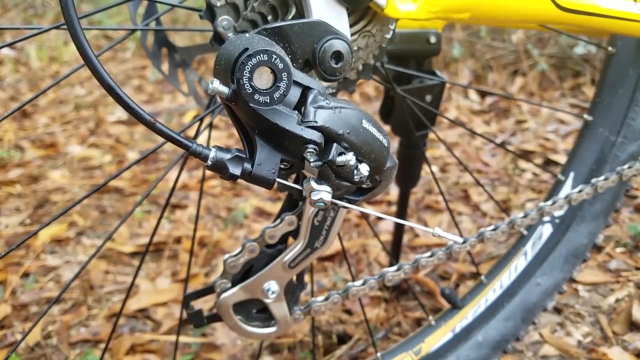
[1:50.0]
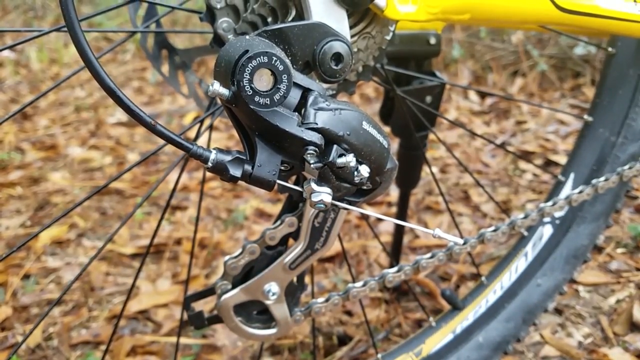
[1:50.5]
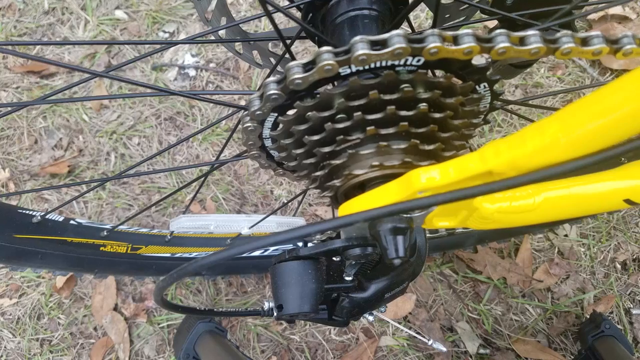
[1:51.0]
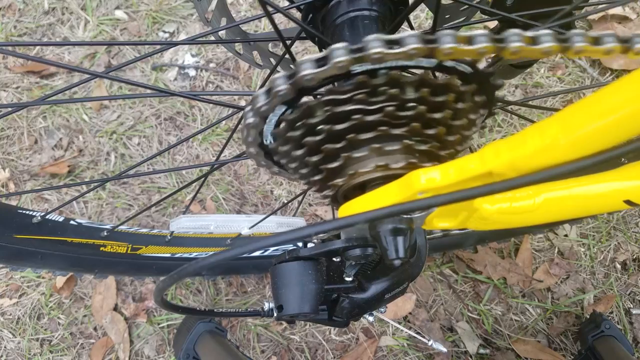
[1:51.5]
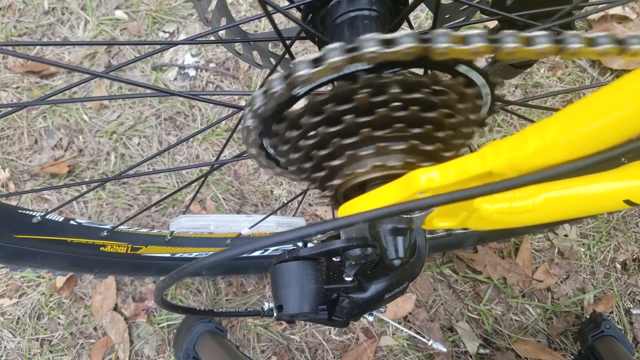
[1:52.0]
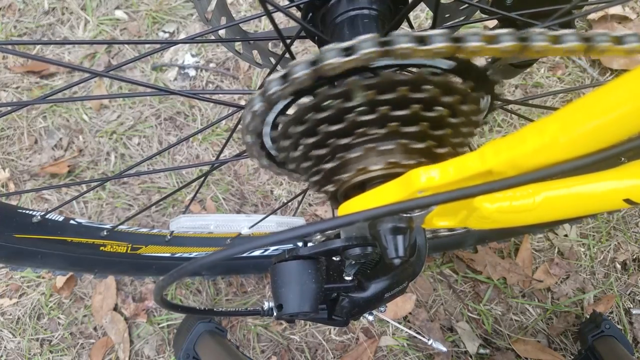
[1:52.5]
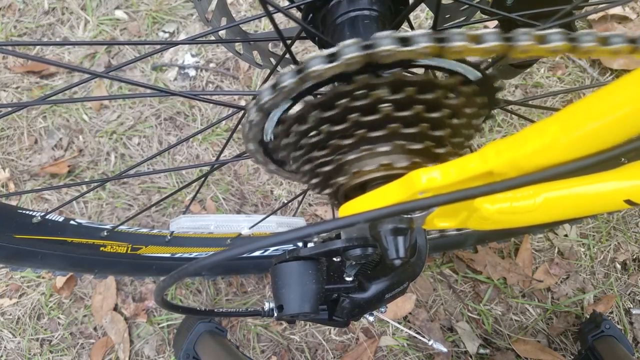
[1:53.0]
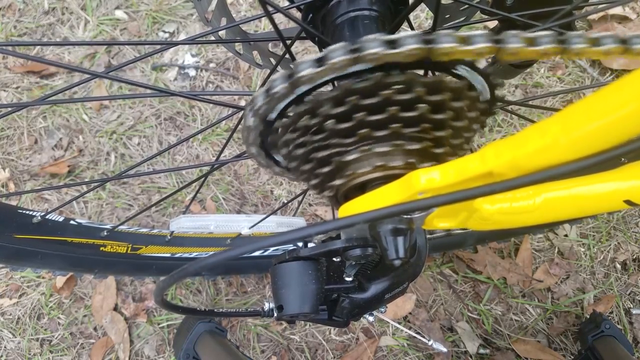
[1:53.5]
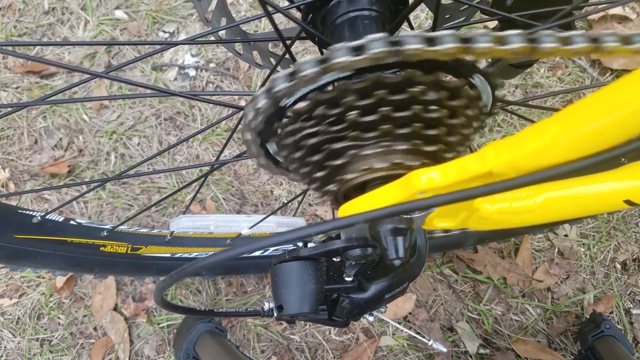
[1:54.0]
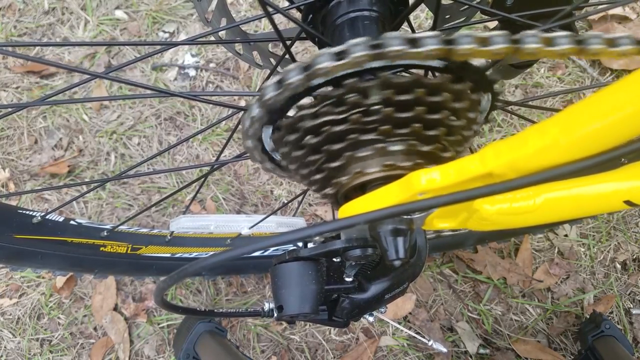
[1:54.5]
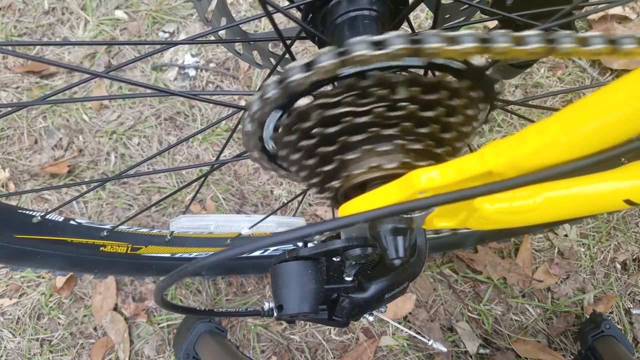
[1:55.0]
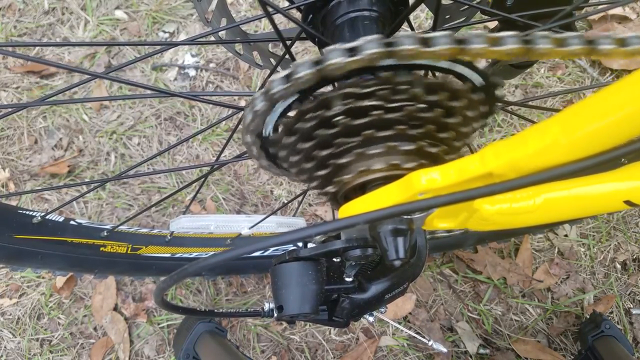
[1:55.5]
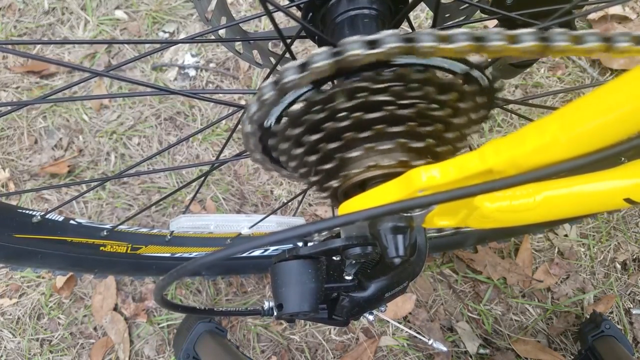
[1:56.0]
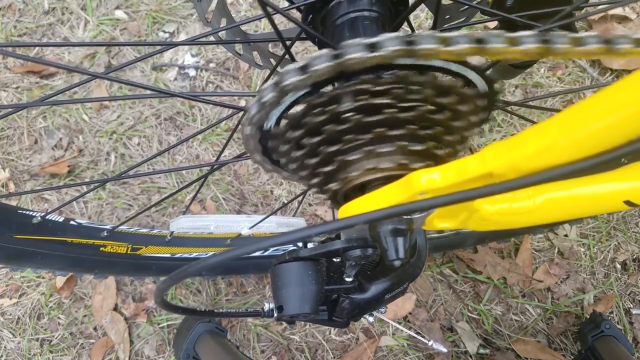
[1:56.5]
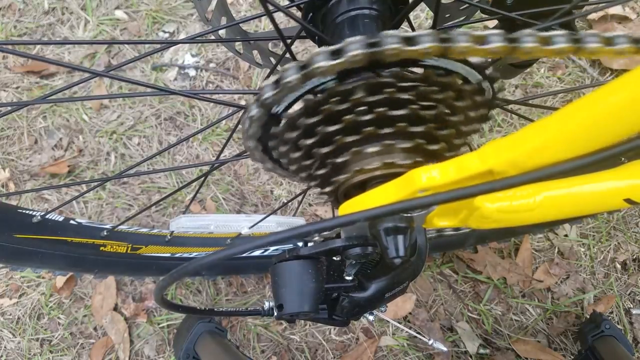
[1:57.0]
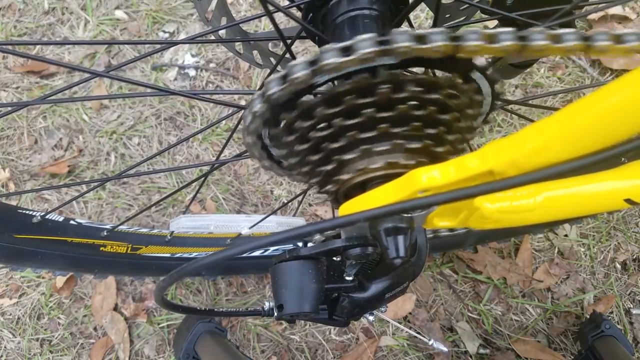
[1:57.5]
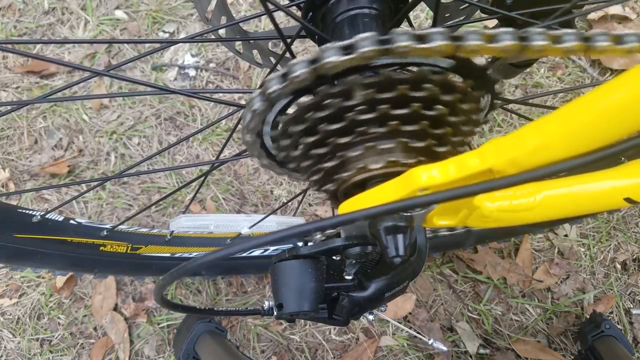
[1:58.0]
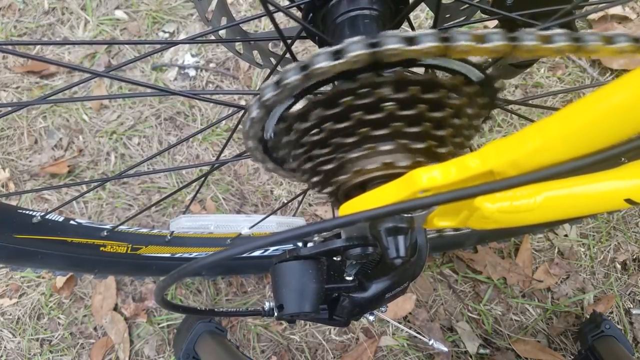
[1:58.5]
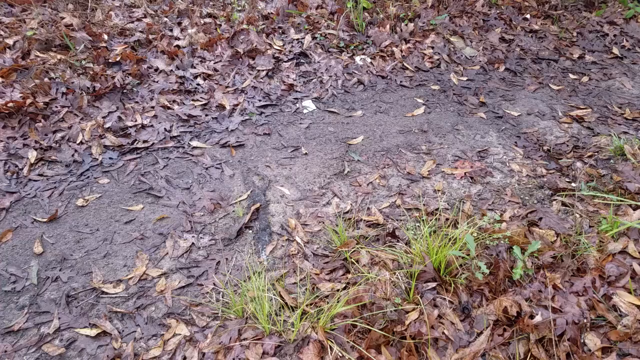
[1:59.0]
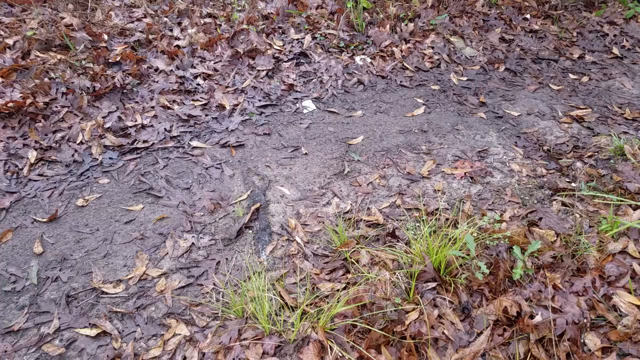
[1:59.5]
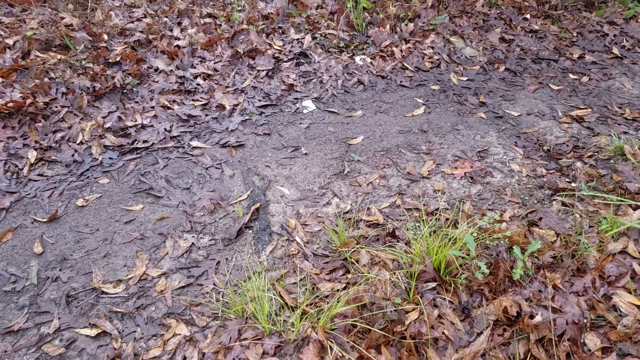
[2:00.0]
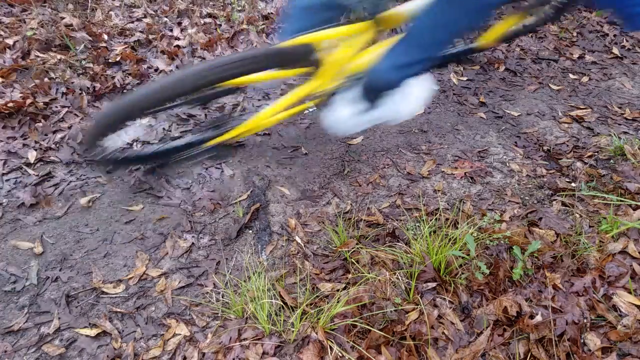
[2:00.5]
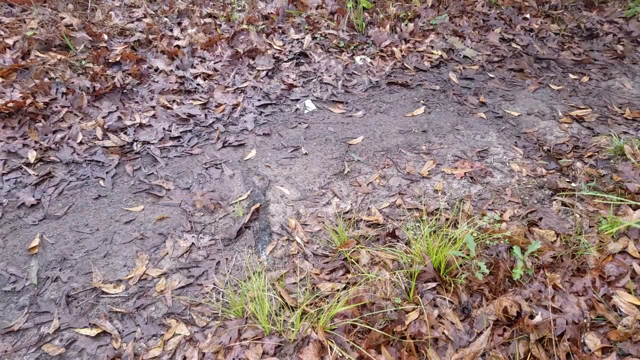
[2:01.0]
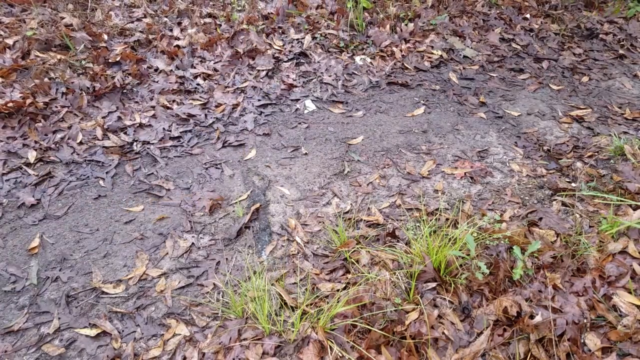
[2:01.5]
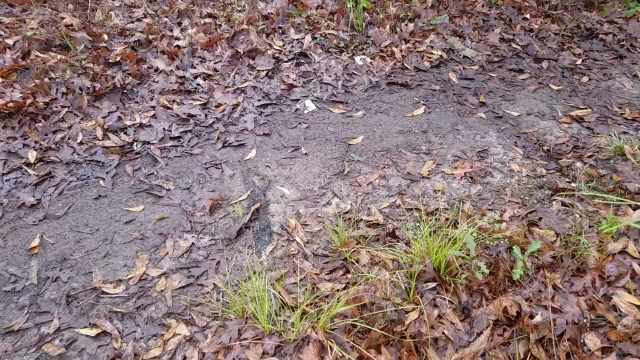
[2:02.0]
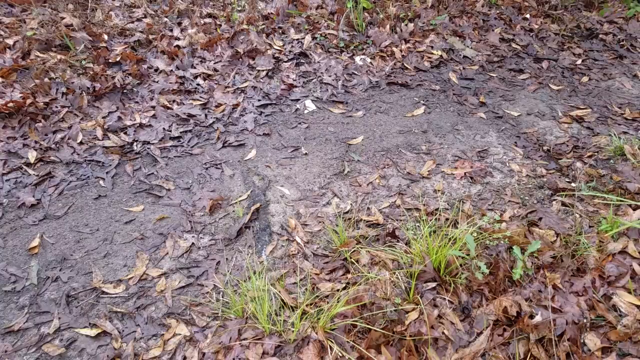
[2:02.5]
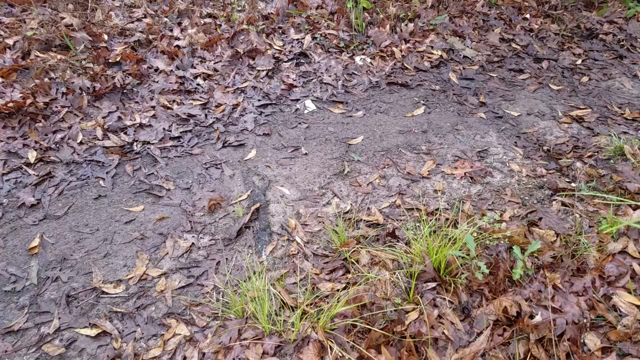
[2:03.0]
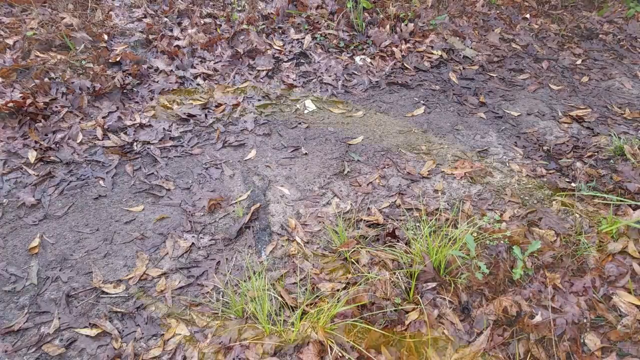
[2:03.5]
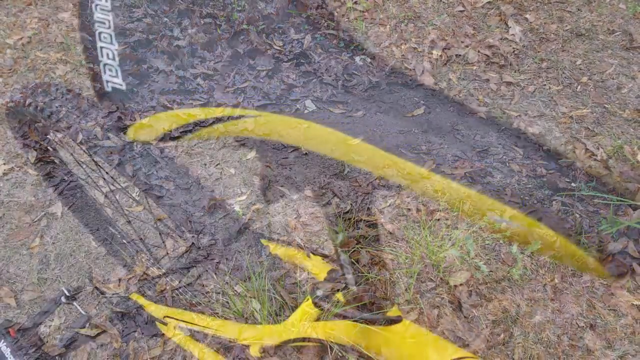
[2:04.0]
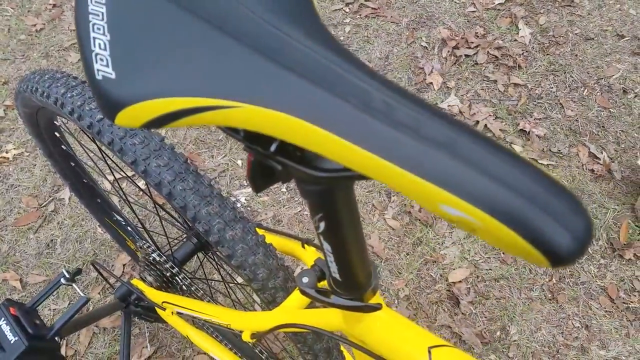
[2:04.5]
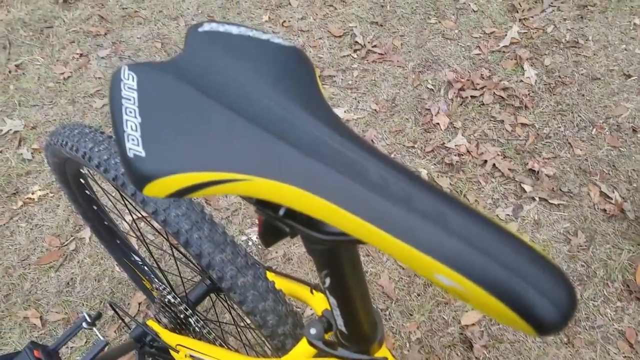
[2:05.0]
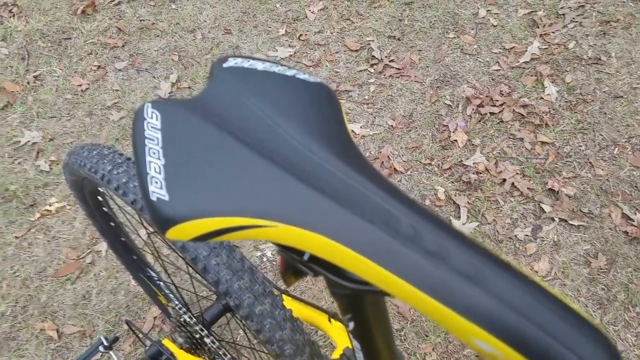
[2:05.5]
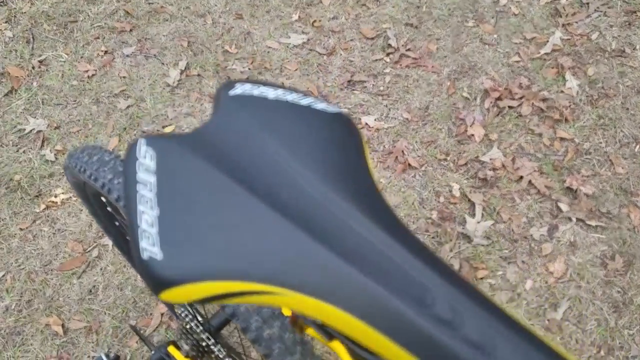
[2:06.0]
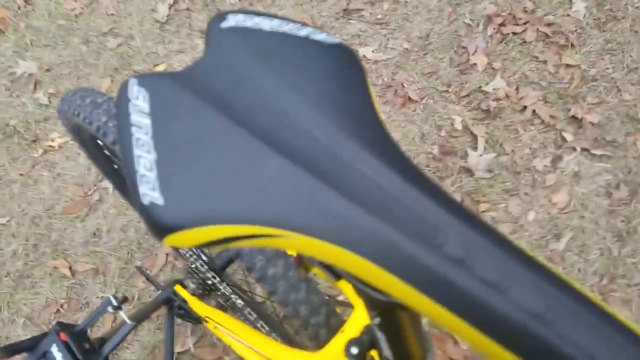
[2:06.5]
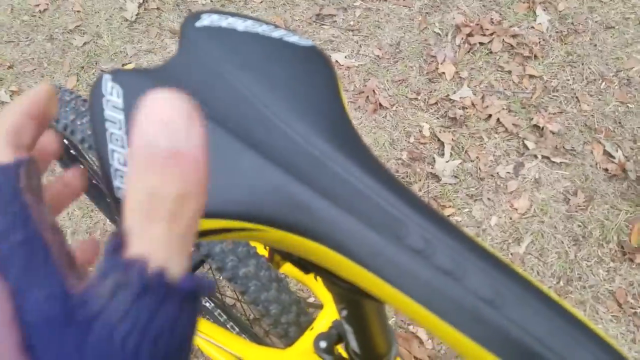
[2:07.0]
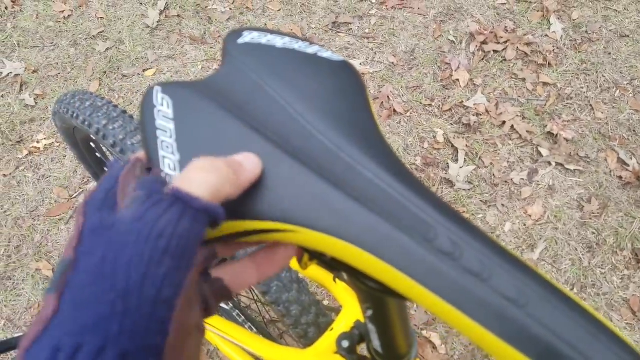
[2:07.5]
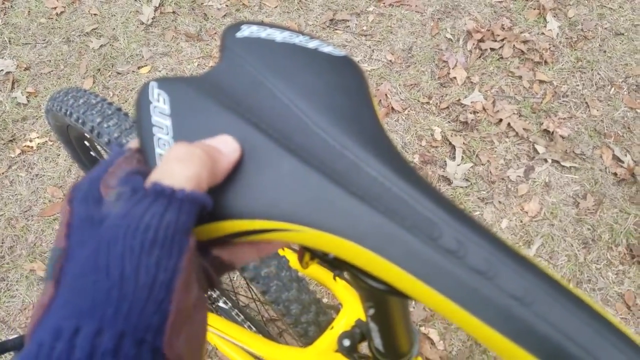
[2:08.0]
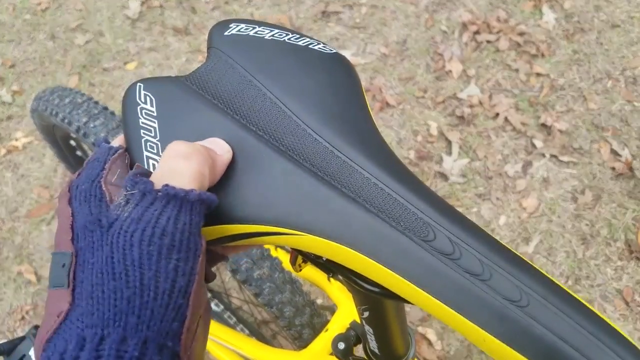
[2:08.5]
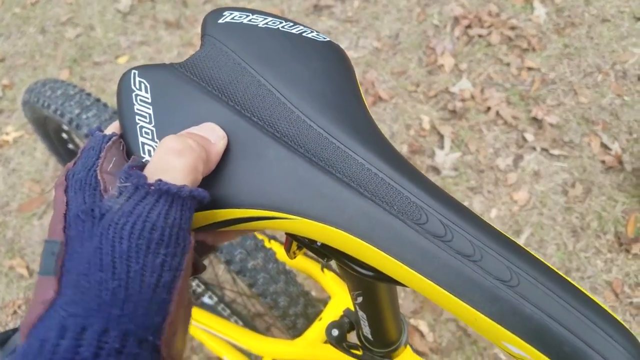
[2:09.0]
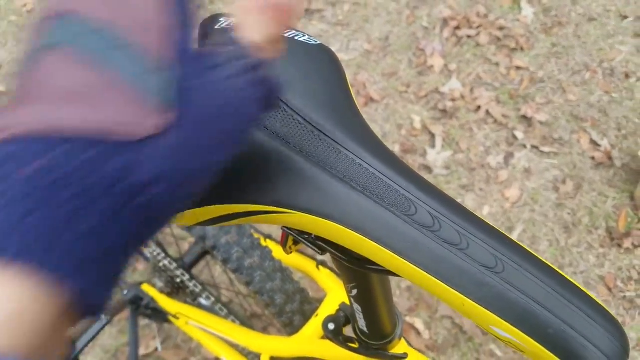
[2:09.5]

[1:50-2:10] A close-up shows the back of the bike, where the chain goes around by the back tire; the bike's frame is yellow. The gears switch with the chain, and then the bike is ridden by. Next comes the banana seat, which is tested by squeezing it. Something on the back tire seems to be a brake. The chain has no grease on it at all. Someone rides around on the bike.